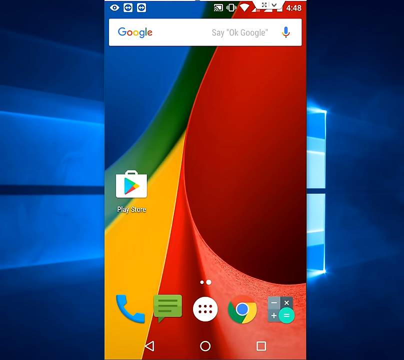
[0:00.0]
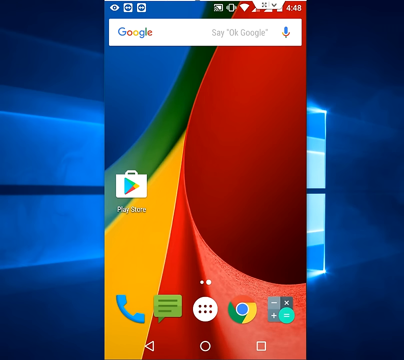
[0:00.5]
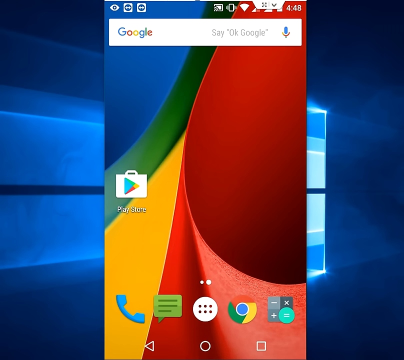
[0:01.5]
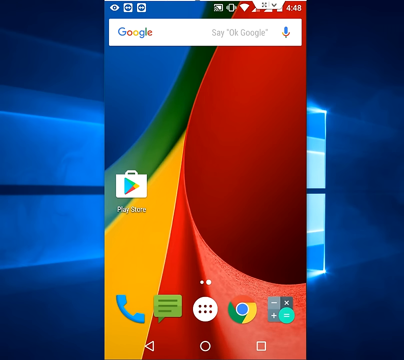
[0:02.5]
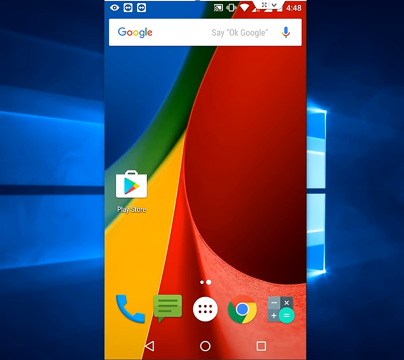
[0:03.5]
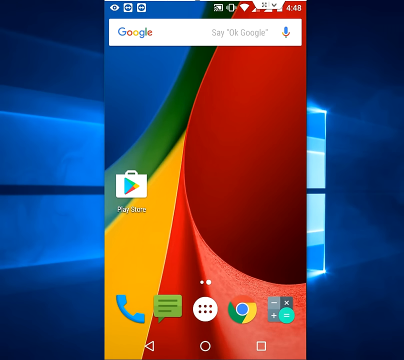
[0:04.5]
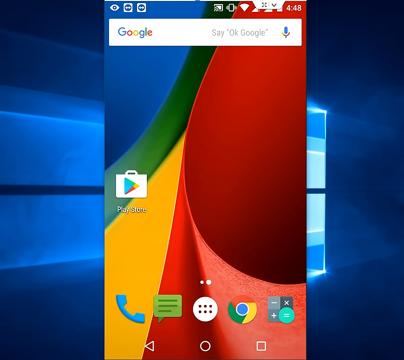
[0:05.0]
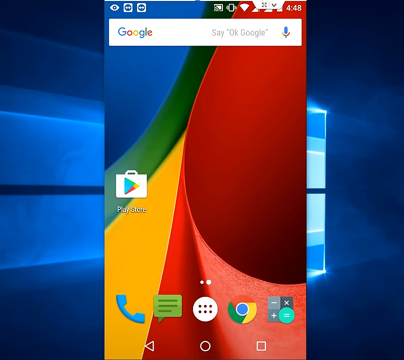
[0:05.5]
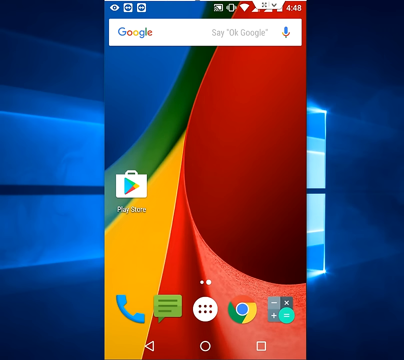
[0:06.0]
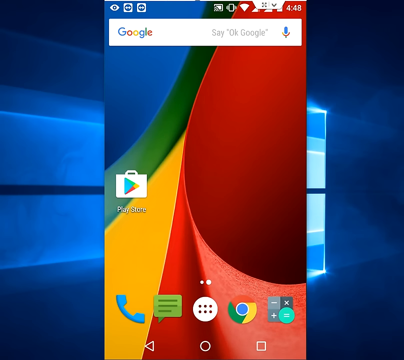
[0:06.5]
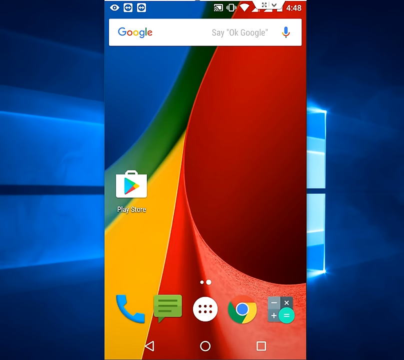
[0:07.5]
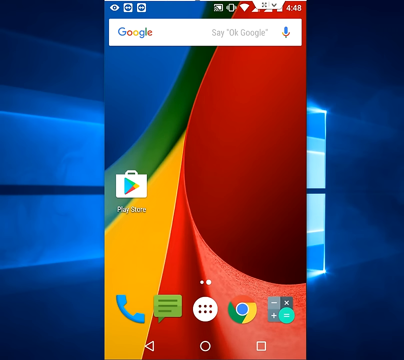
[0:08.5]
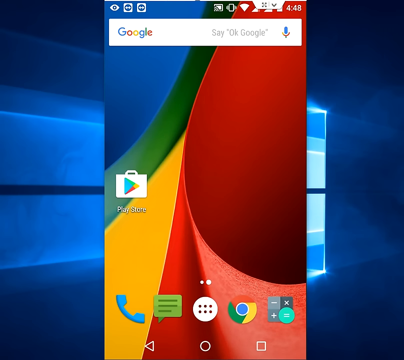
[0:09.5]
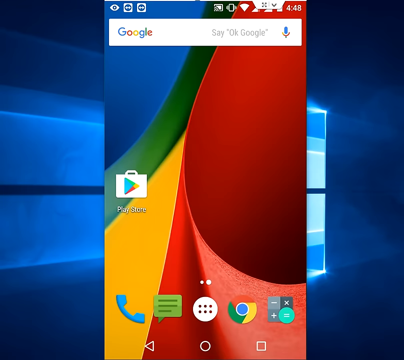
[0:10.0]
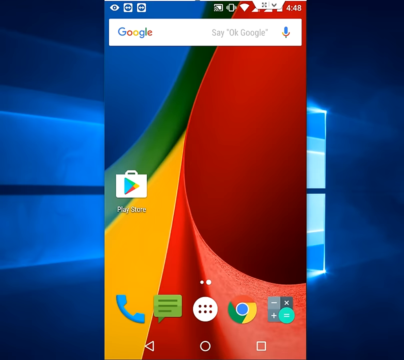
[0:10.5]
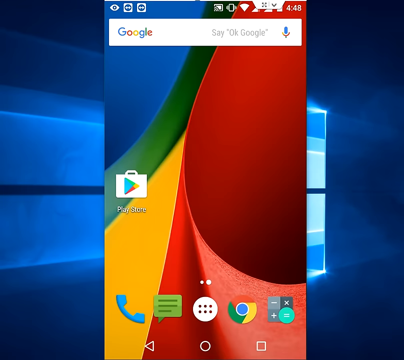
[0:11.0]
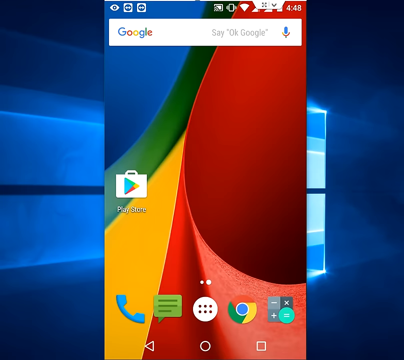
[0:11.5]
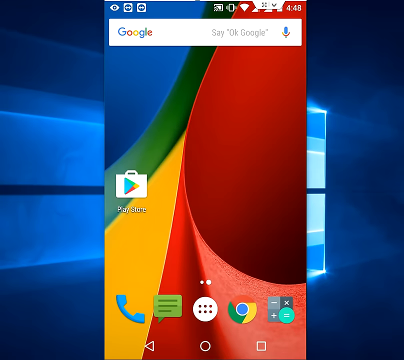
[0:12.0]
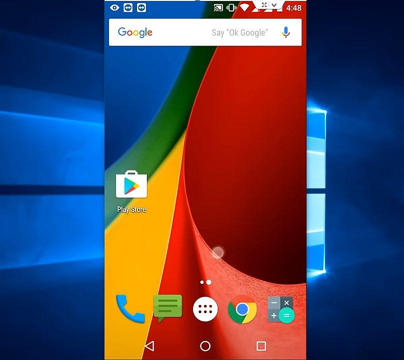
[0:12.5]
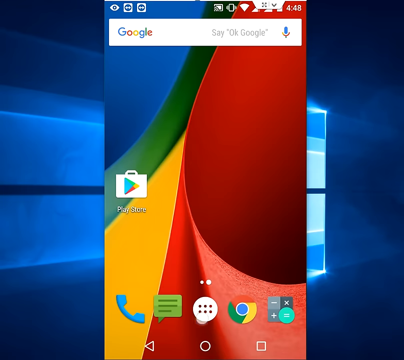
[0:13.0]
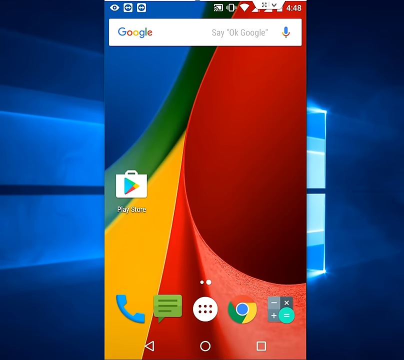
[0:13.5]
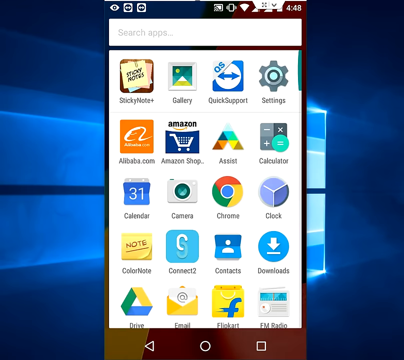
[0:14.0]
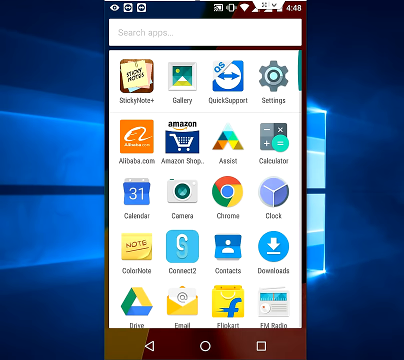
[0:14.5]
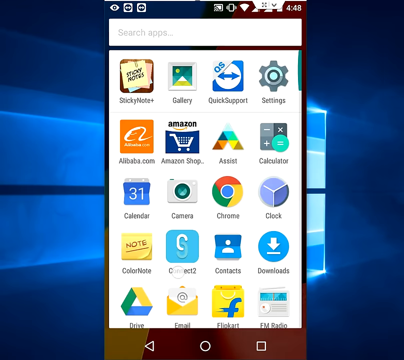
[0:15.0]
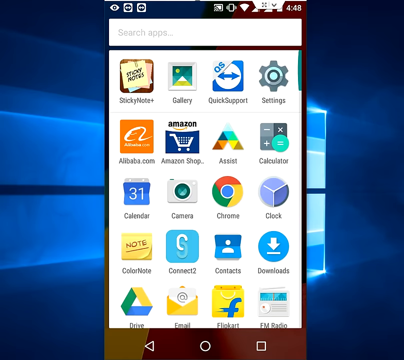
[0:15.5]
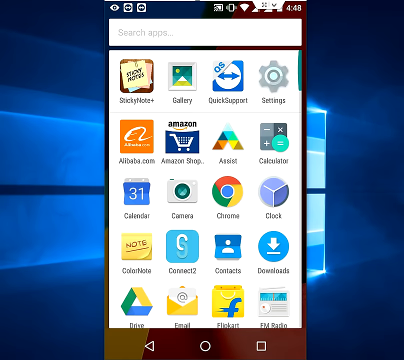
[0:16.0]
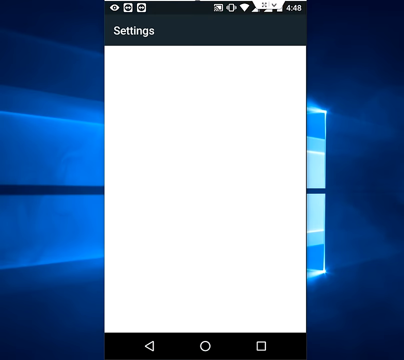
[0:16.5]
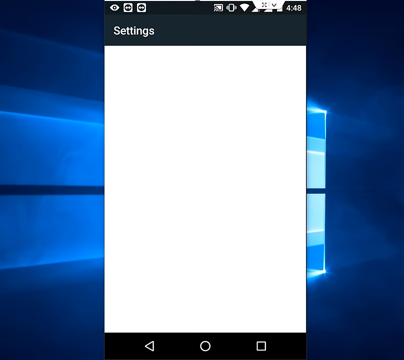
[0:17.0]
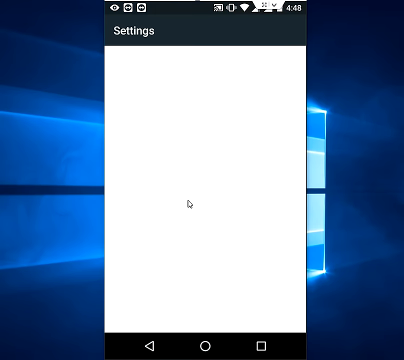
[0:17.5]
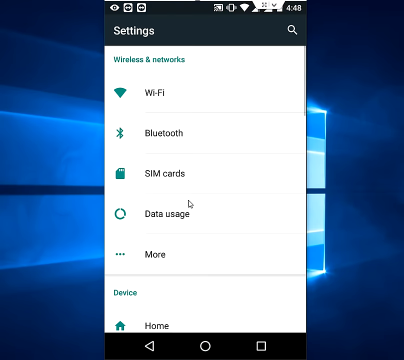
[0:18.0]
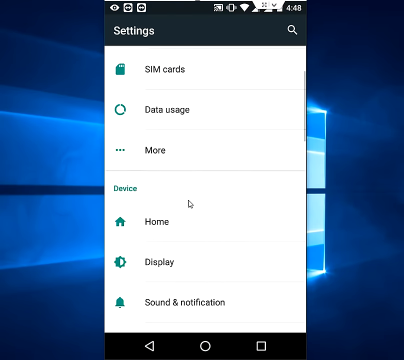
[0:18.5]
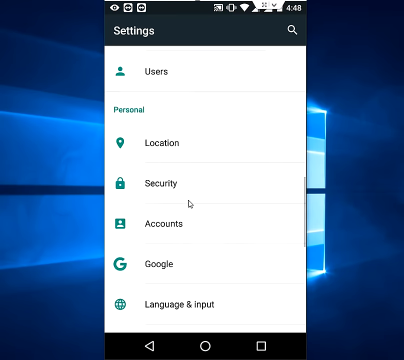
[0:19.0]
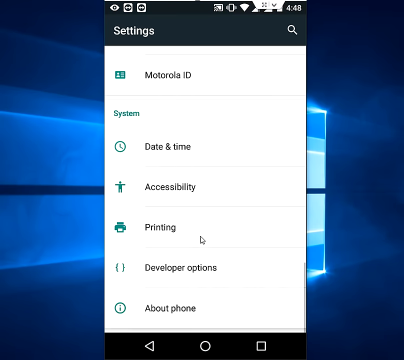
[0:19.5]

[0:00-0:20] The video begins with an image of what looks like a cell phone, with what appears to be a Windows logo in the background. The phone's screen shows the different apps that have been downloaded, along with icons for the Google Play Store, the messaging app, Google, the calculator and the telephone. The apps that appear to have been downloaded are Sticky Notes, Gallery, Quick Support, Alibaba, Amazon Shop, Assist, Calculator, Calendar, Camera, Chrome, Clock, Color Note, Connect To, Contacts, Downloads, Google Drive, Email, Flickr and FM Radio. The video then moves to the phone's settings application, which lists these clickable options: home screen, display, sound and notification, apps, storage and USB, battery, and memory. Each option has a teal-colored logo symbol with the option's name written in black to its right.